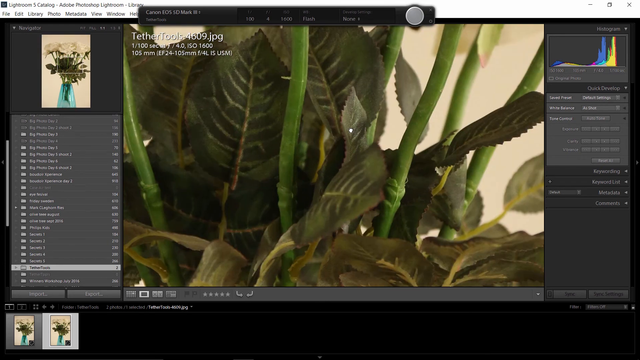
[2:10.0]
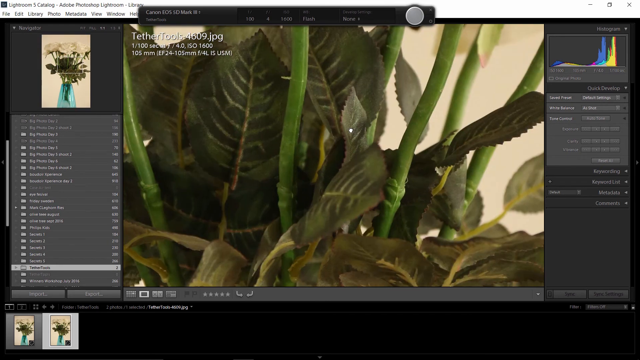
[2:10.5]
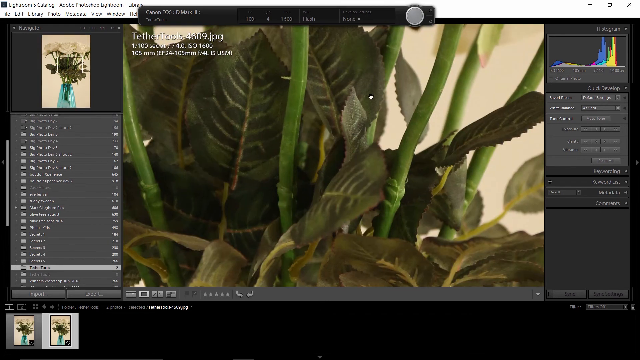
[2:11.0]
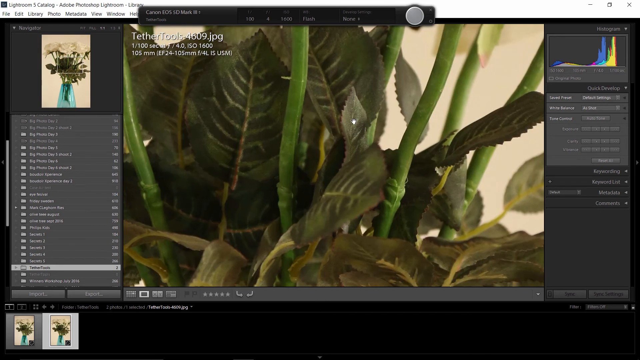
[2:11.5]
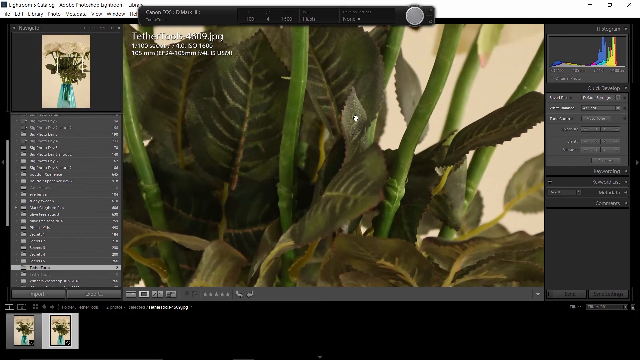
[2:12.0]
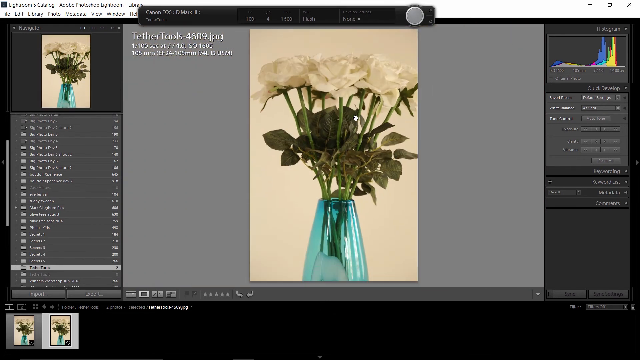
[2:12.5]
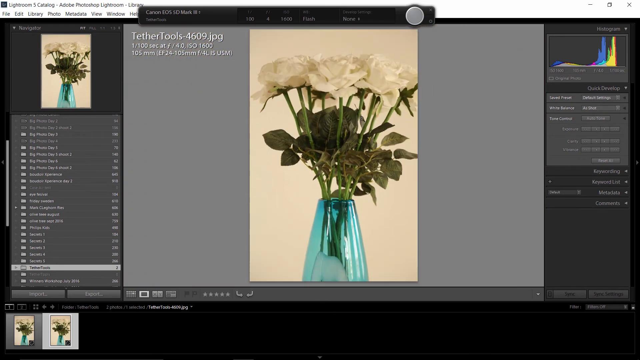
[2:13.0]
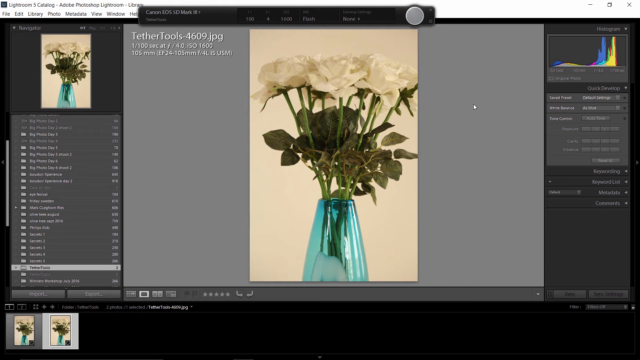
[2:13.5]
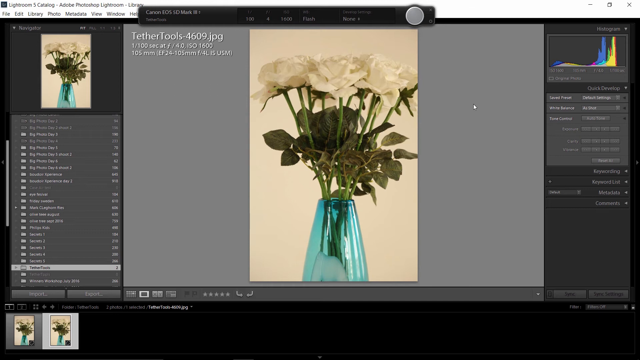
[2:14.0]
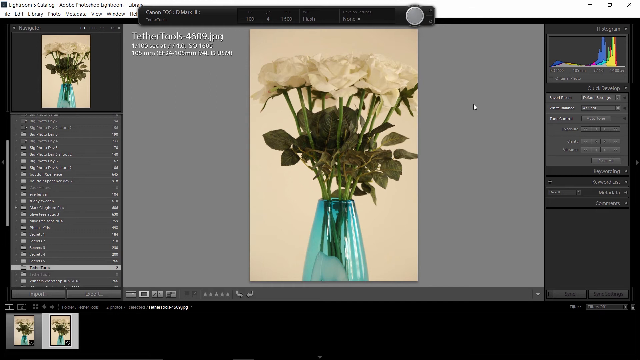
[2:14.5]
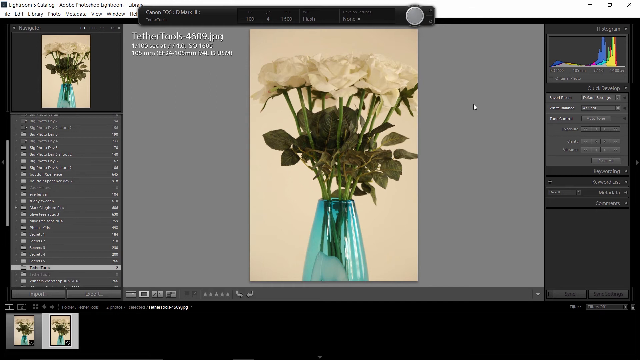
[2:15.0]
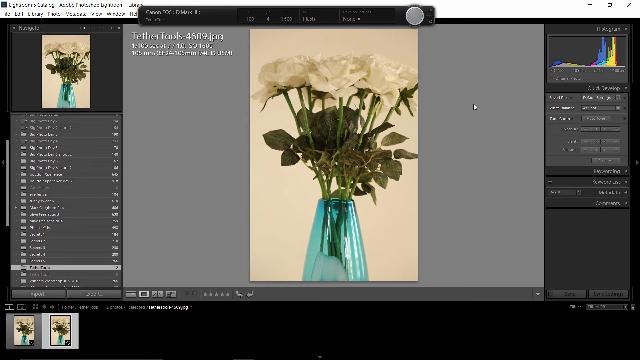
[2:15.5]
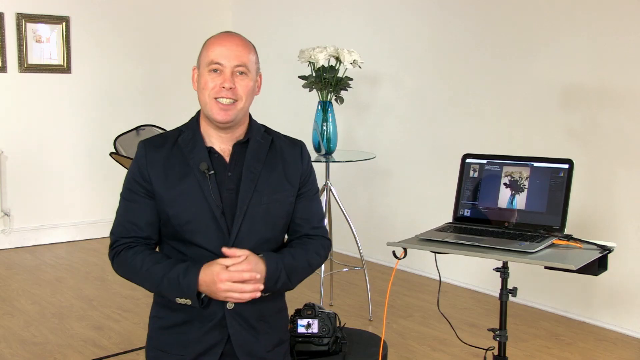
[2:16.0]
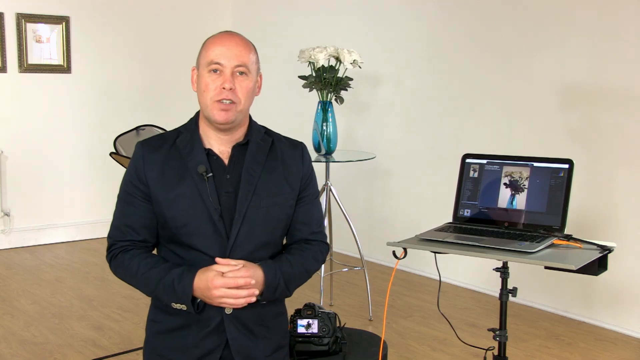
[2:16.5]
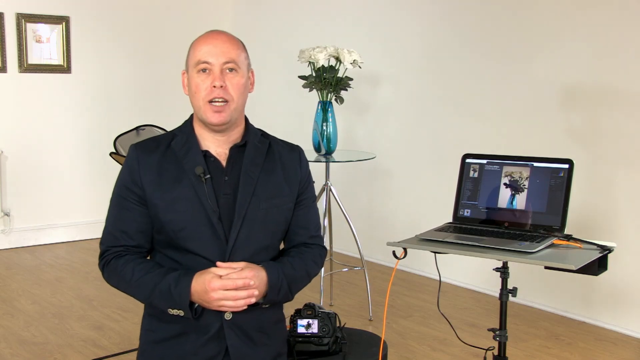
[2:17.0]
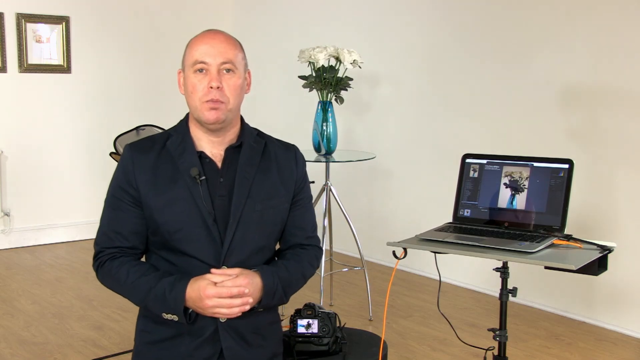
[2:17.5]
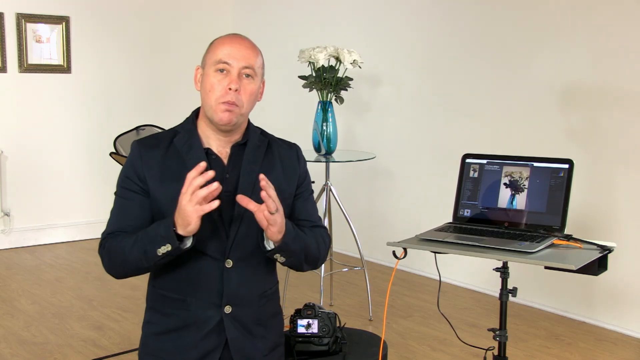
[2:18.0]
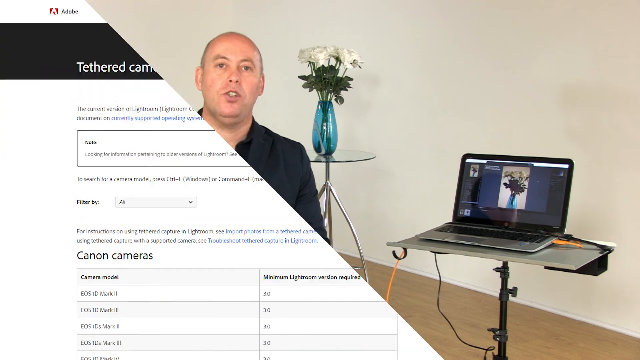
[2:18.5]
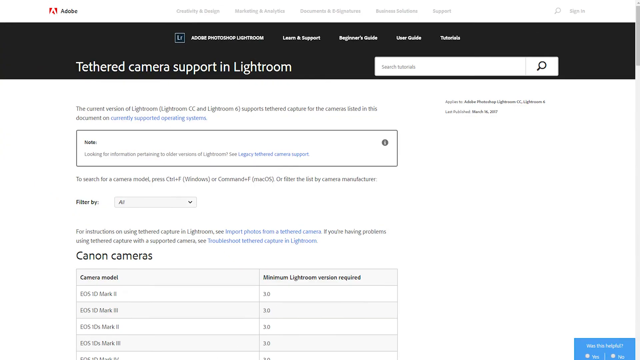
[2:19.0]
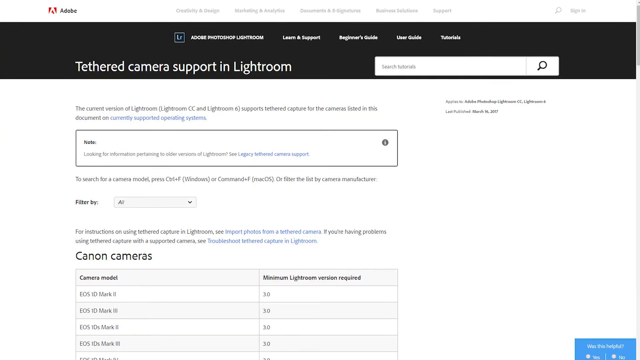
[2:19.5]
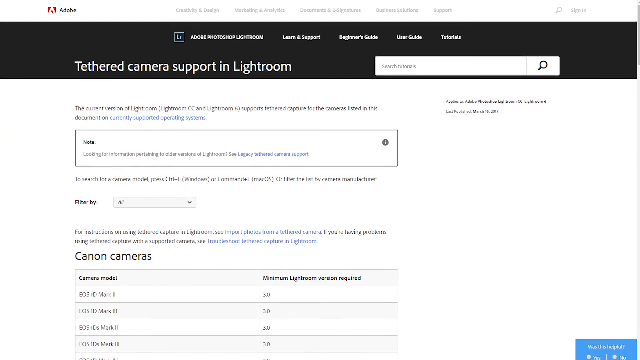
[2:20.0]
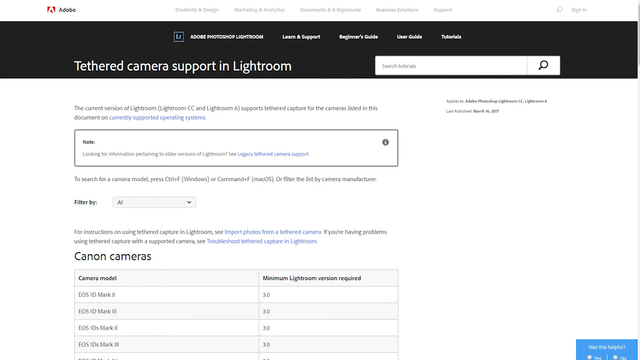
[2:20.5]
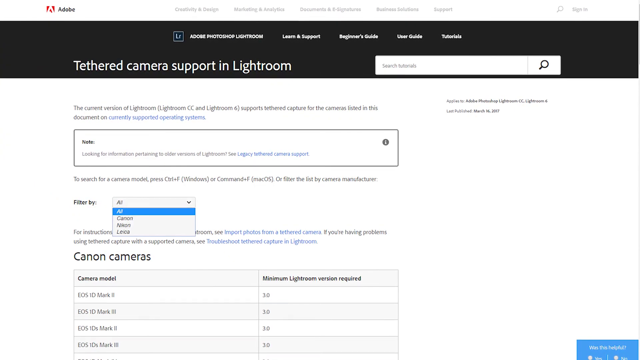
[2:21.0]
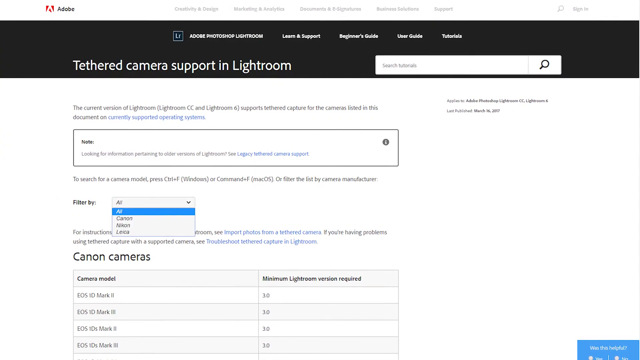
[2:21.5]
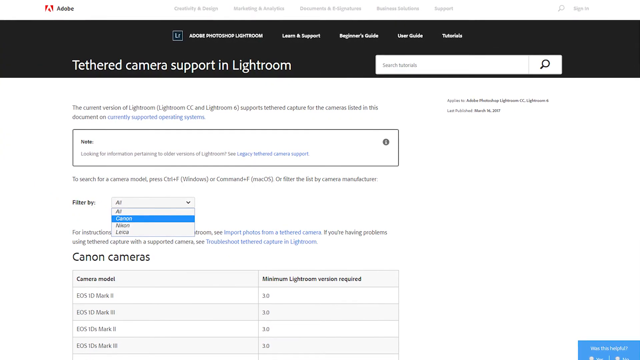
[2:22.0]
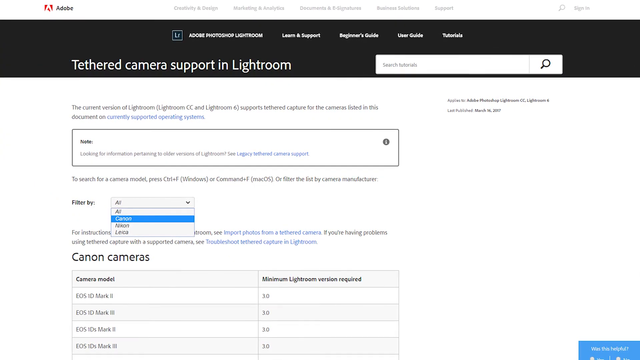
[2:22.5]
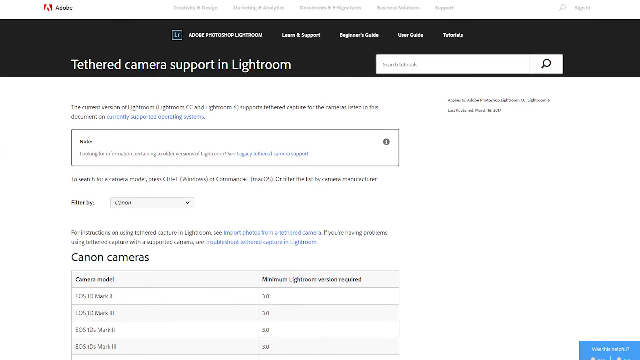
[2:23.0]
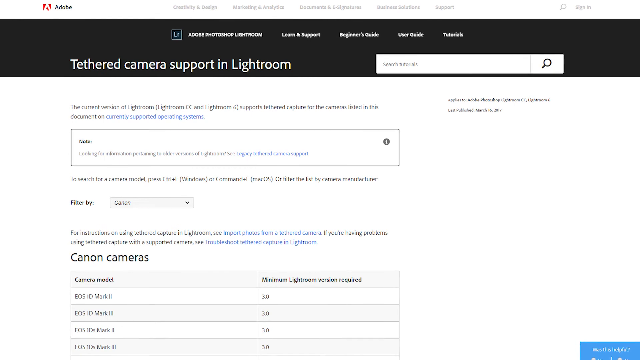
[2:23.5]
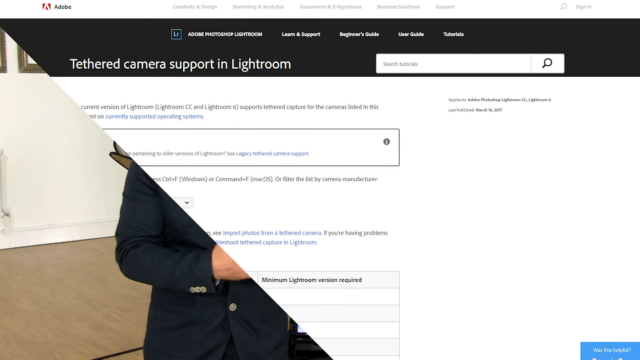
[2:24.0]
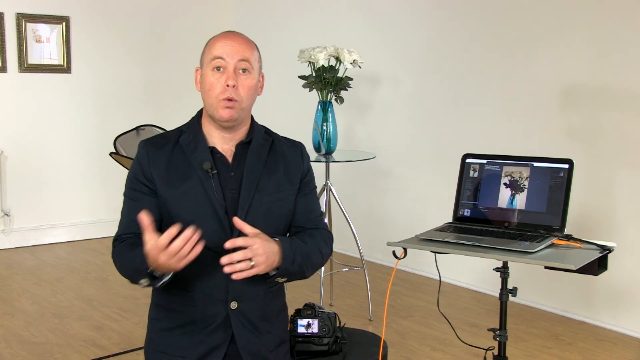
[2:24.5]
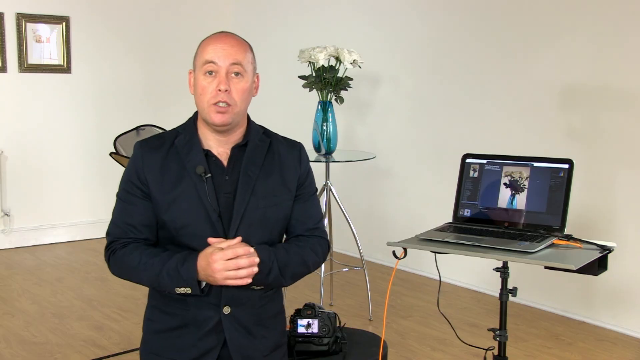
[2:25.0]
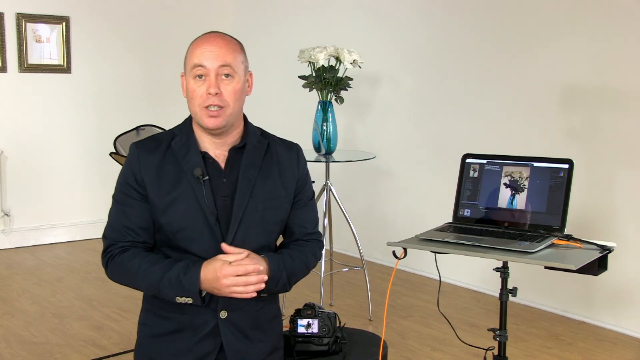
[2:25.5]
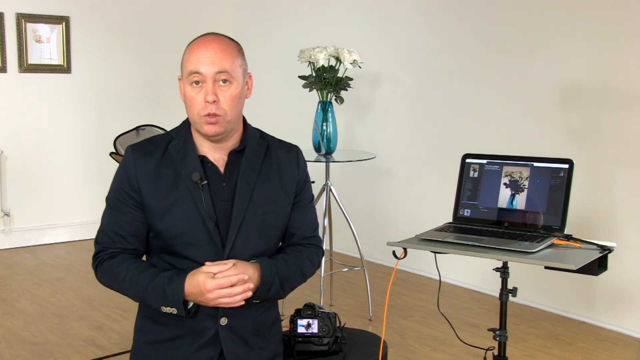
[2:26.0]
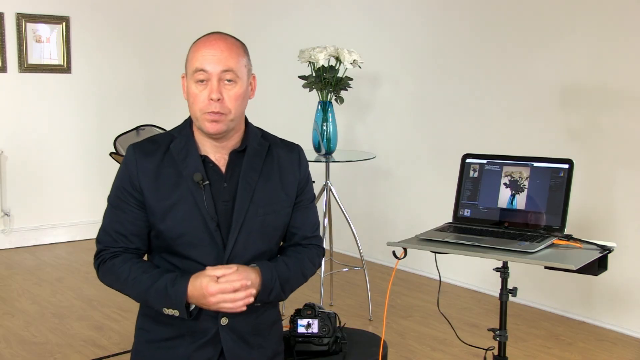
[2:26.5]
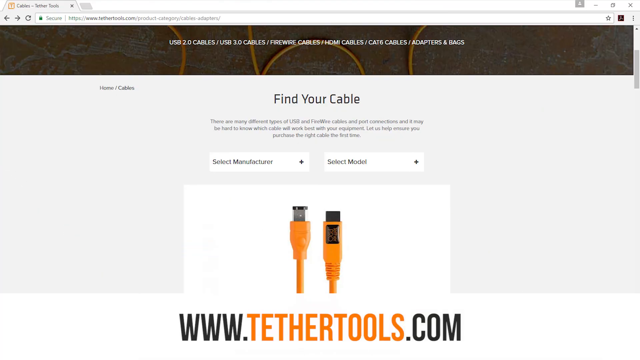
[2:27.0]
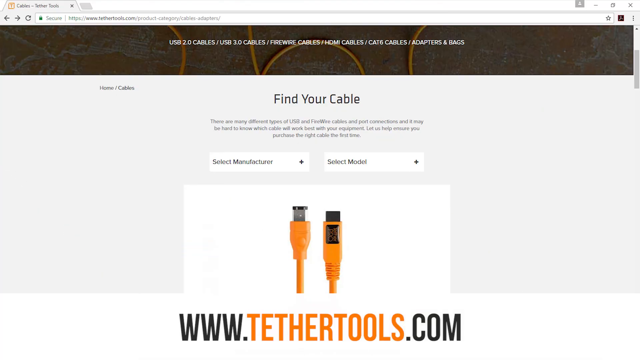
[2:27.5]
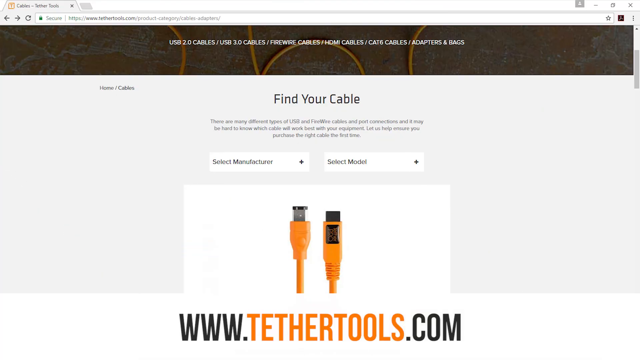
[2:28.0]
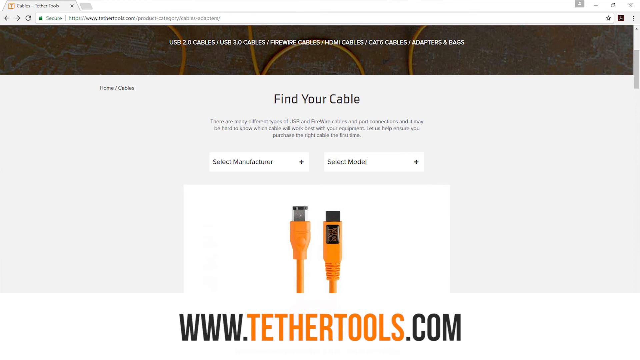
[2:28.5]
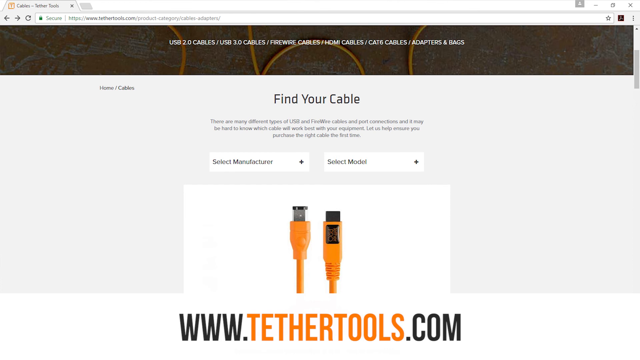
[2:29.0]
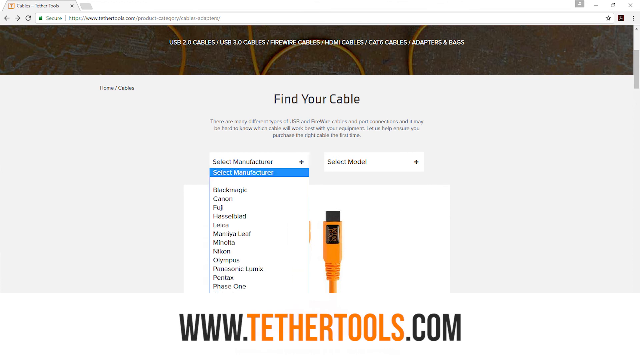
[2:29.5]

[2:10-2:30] The detail of the stems is also visible. The stems are a paler green, while the leaves are a darker green with white veins within them. The leaves all overlap one another, and the stems are quite prominent in the shot because of their paler colour. The man zooms out to show the full image, including the blue vase, and then the view zooms out further to show the man in shot again, with the blue vase and flowers on the tall table in the background. The camera is on the table beside him, and its screen shows the picture he has just taken; on the desk beside him to his left is a laptop that also shows the picture. Another screen recording of the laptop follows, this time showing "tethered camera support in Lightroom". He clicks on "filter by" and selects Canon. The man is then shown back in the room, followed by another web page reading "find your cable", with "www.tethertools.com" at the bottom.